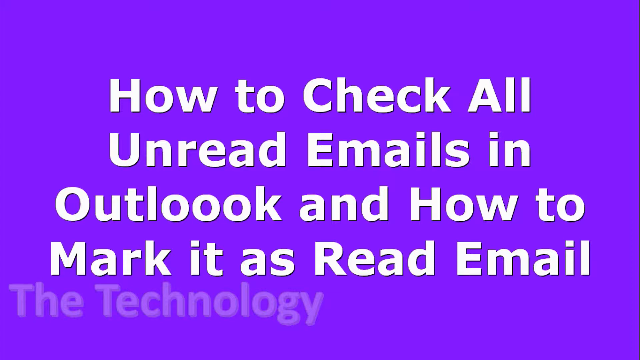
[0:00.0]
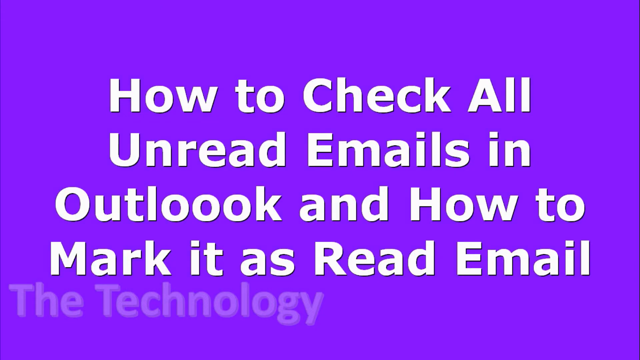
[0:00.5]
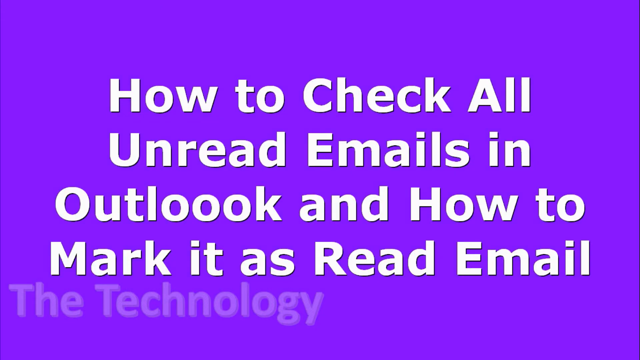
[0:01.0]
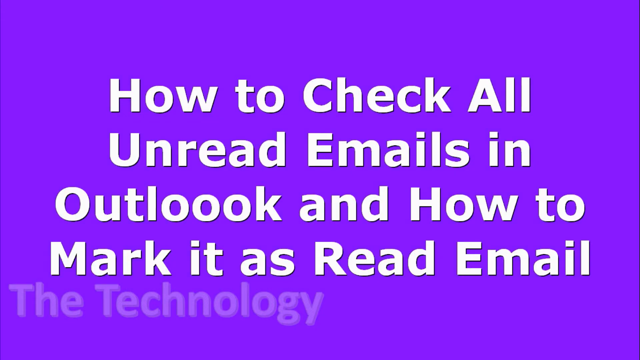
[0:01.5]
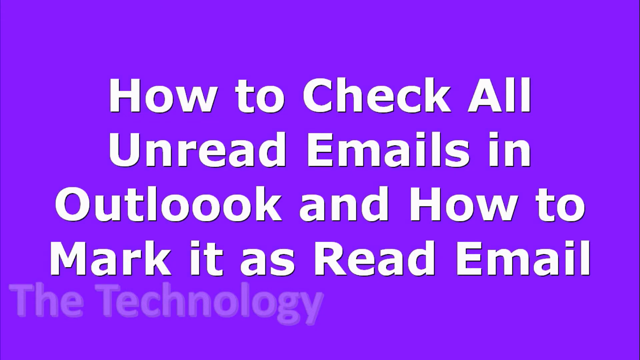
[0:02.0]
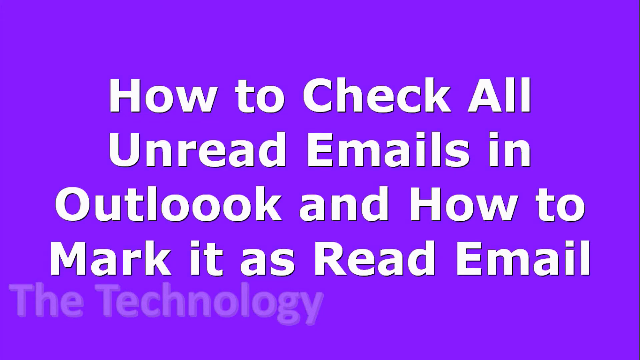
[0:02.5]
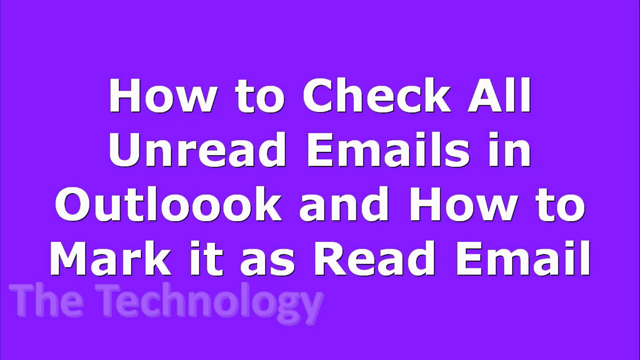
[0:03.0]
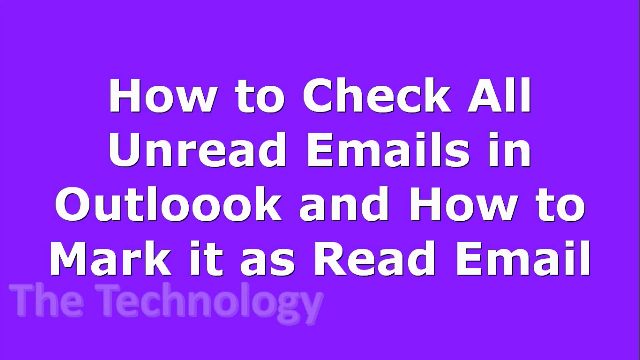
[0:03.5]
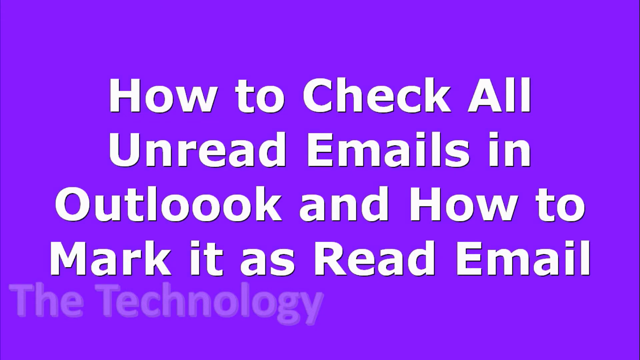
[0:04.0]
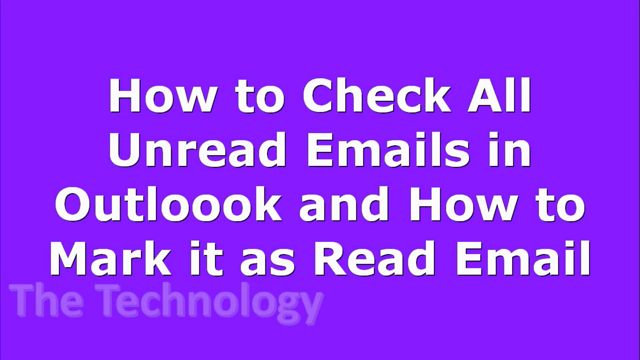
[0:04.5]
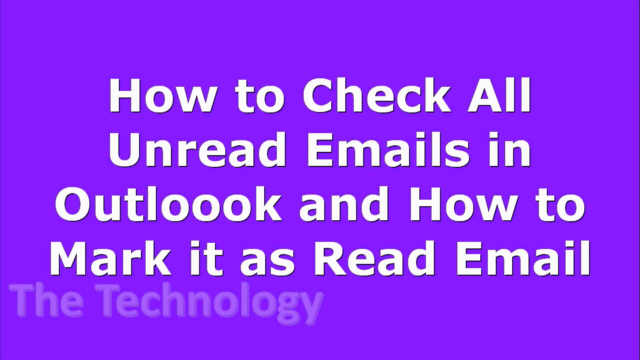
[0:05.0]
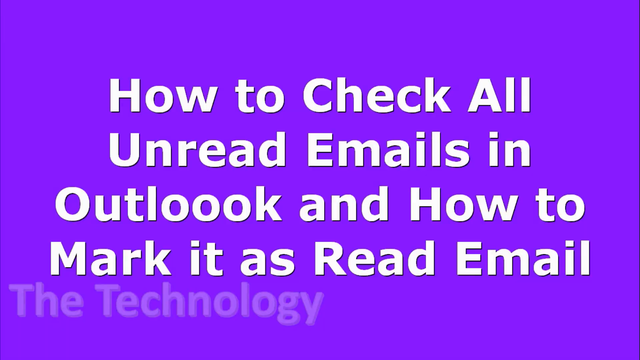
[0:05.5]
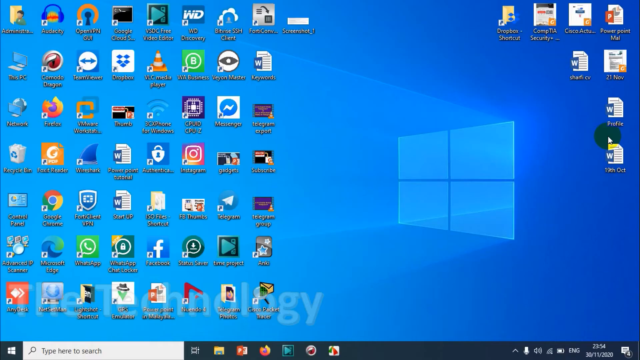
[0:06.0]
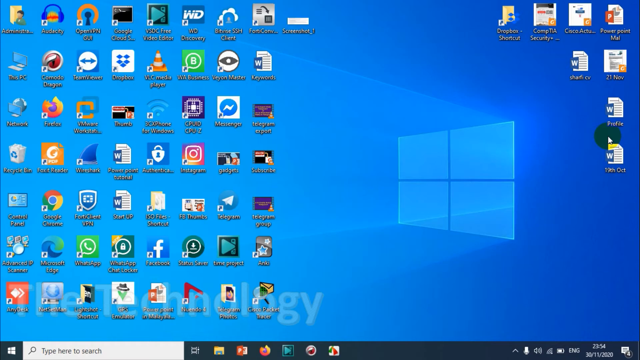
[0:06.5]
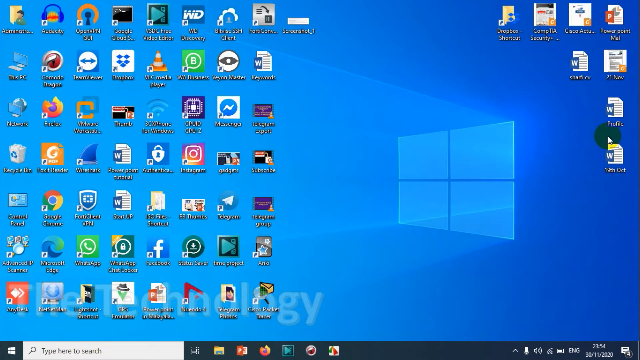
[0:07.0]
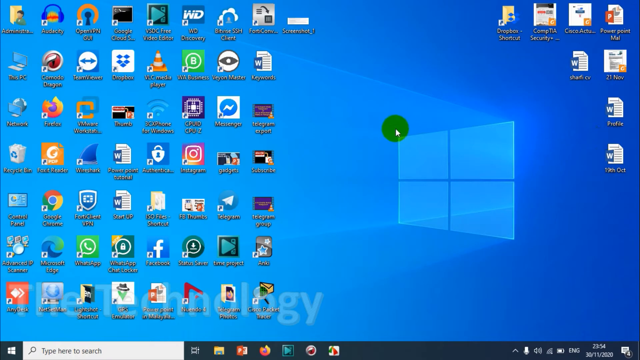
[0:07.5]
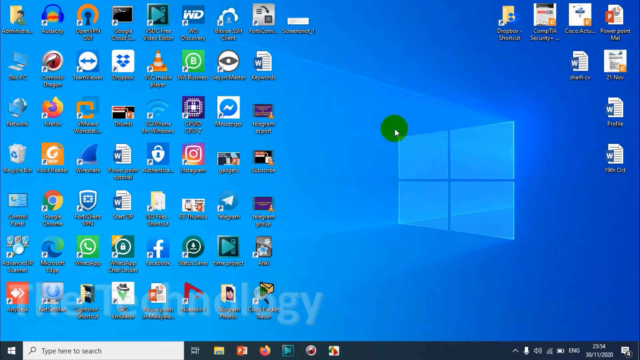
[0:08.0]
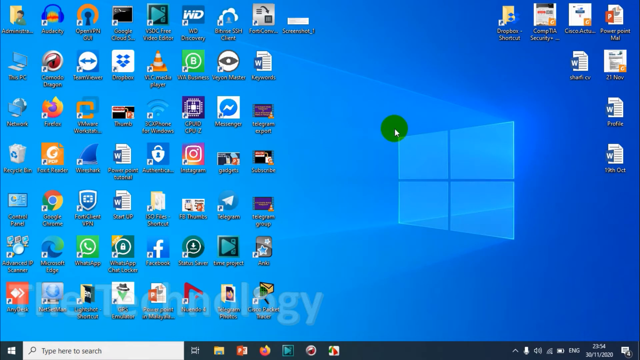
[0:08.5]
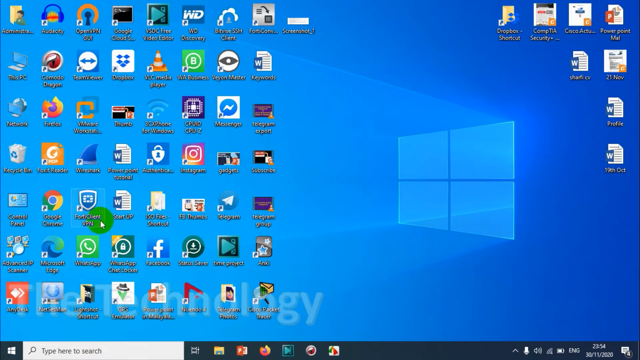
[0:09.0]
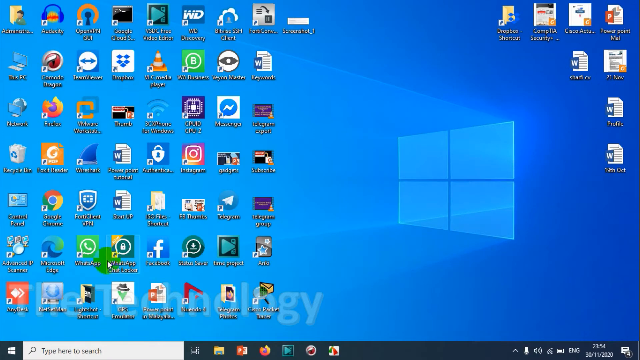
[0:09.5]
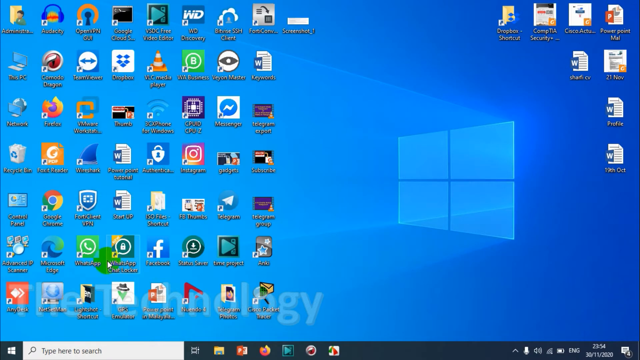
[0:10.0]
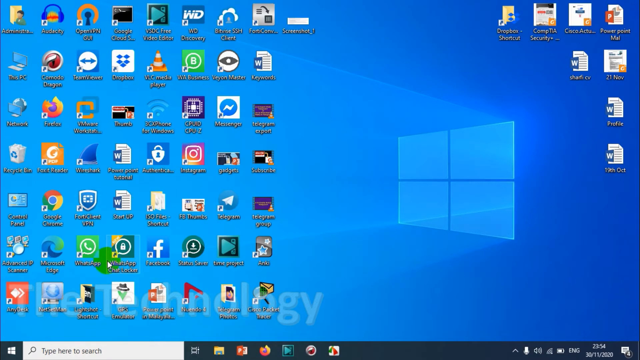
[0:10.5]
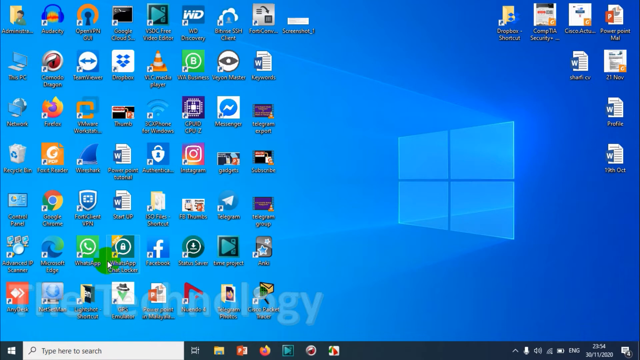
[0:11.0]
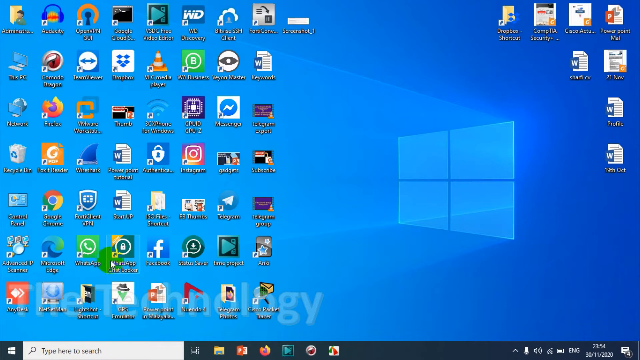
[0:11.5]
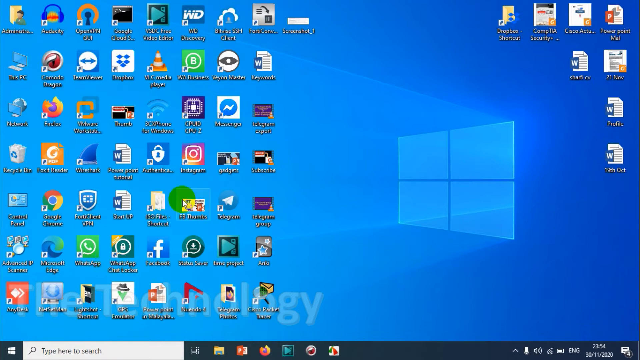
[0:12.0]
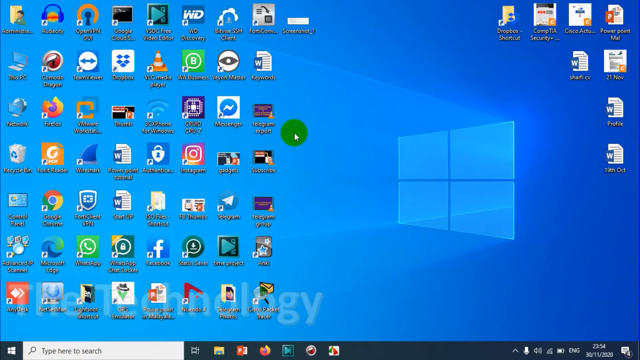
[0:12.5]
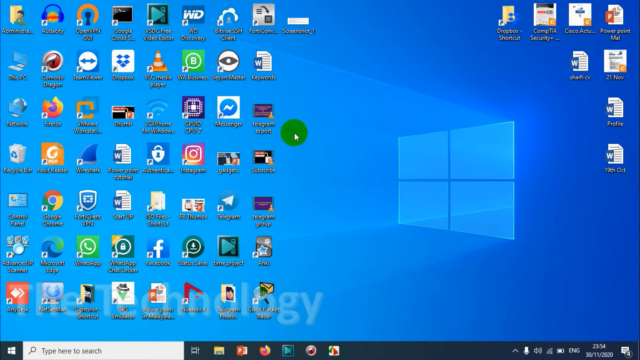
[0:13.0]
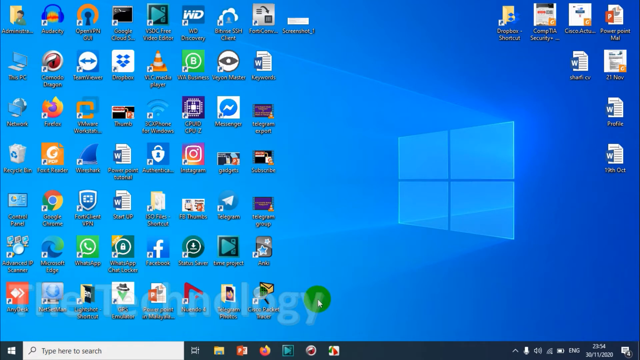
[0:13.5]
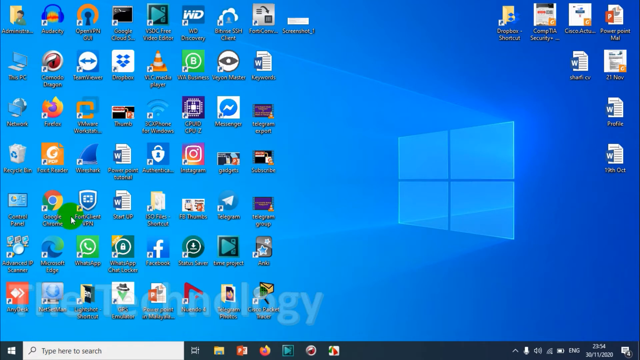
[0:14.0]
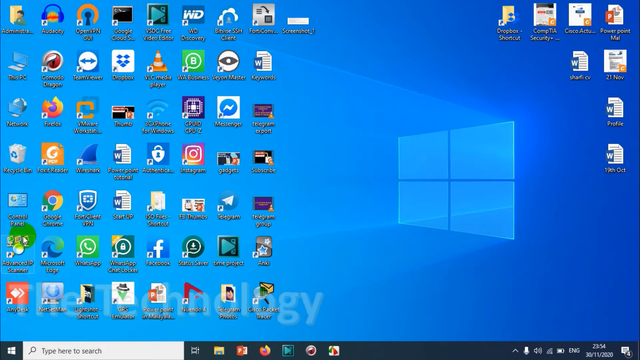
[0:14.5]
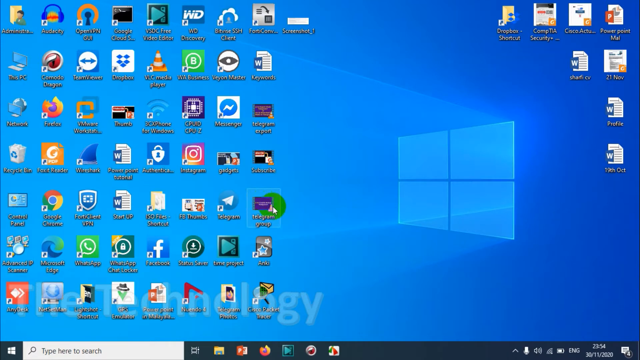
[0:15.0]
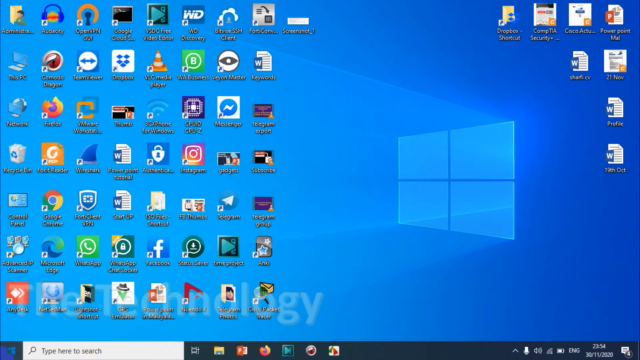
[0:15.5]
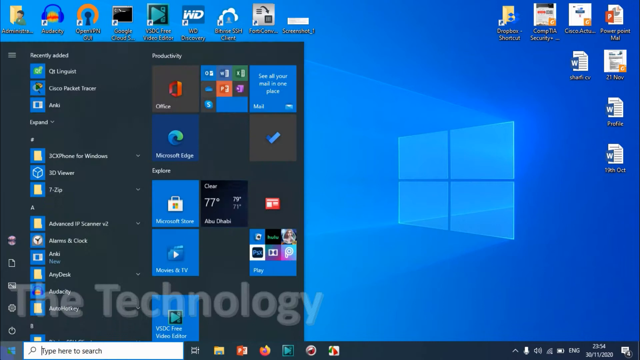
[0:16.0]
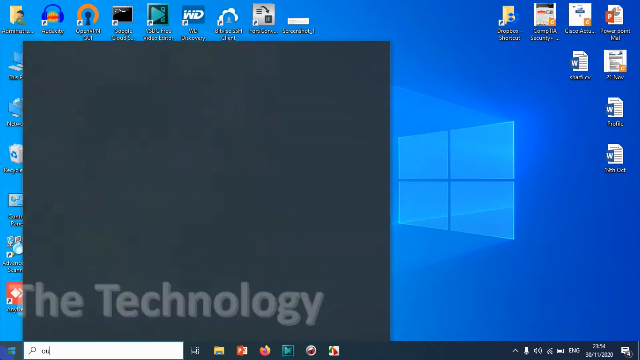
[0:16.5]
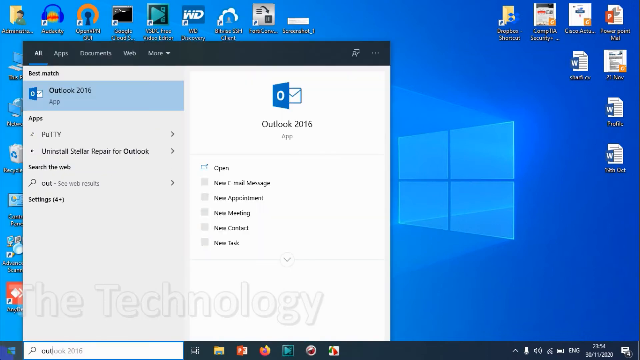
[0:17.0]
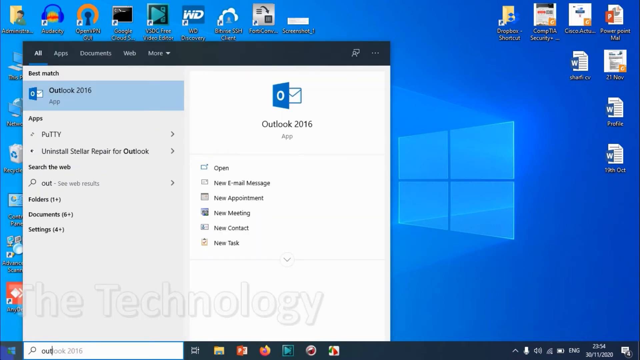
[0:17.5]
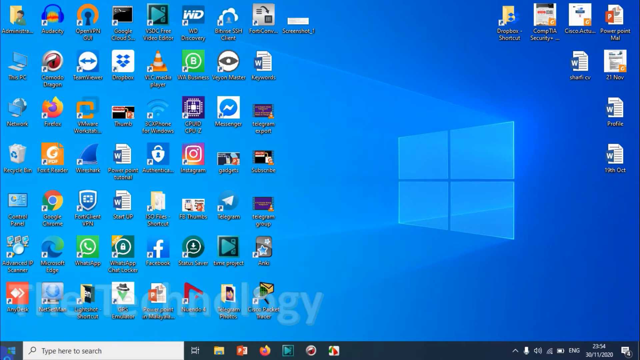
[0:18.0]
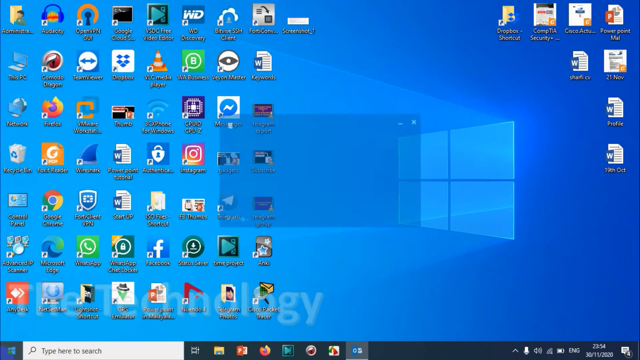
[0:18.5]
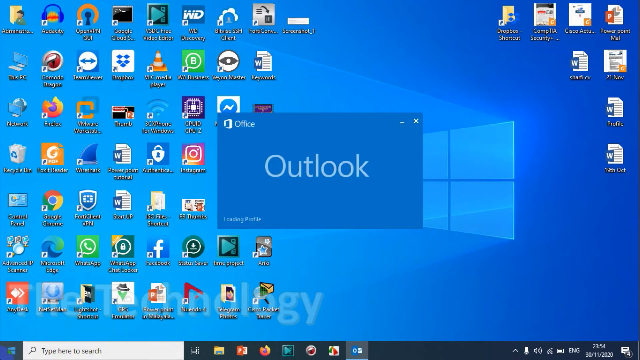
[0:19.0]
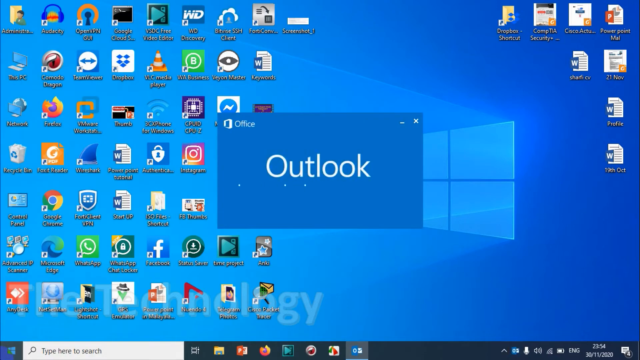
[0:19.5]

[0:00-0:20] The video opens on a purple screen, possibly a computer's. Text reads "how to check all unread emails in Outlook and how to mark it as read email," which seems to be some type of instructional video. In the background, "the technology" is written in a pink, kind of beige-looking purple, kind of opaque. The computer screen then changes to a blue background, with "the technology" still written in the back, a Windows image, and bright blue and baby blue. The person operating the computer moves the mouse back and forth across the screen; the pointer appears as a large, green dot. Several application icons on the screen fill up half of it, and a few applications, maybe about four or five, are at the top of the screen, stacked on top of each other but not in an orderly way. The person clicks the Windows icon in the bottom left-hand corner, which opens a screen where they select the Office Outlook Program, and that program pulls up another screen.